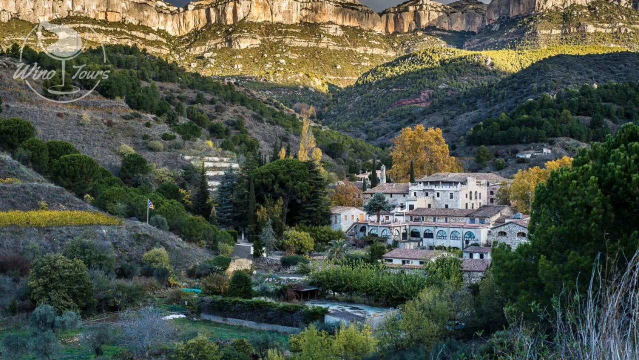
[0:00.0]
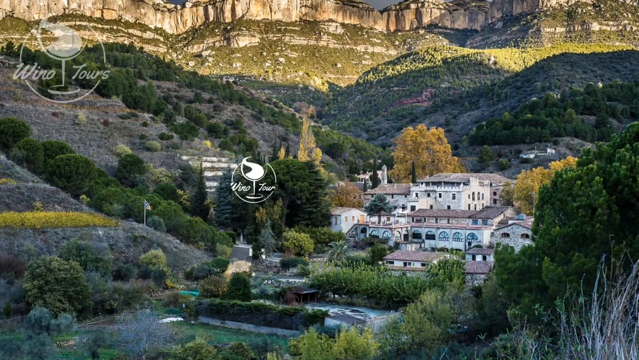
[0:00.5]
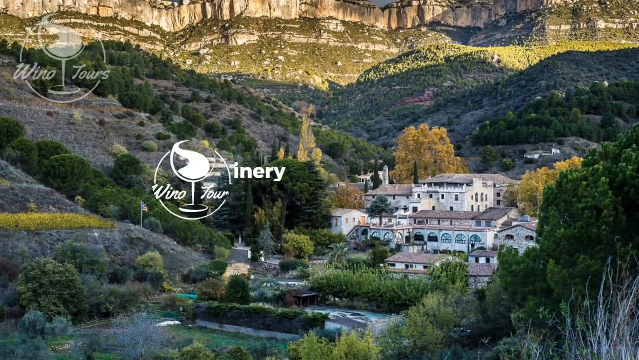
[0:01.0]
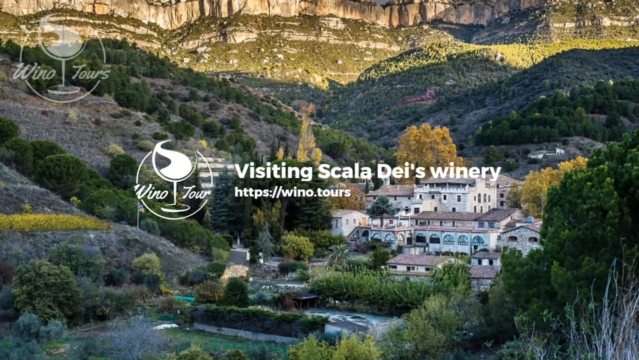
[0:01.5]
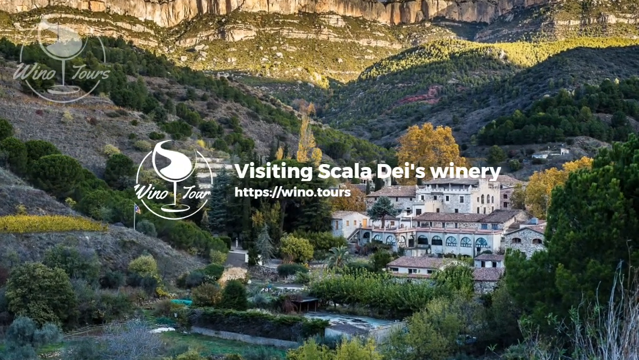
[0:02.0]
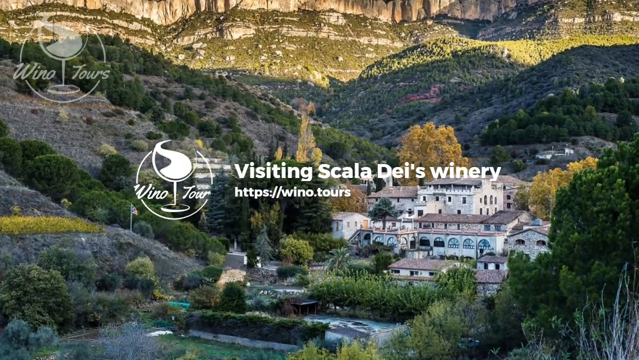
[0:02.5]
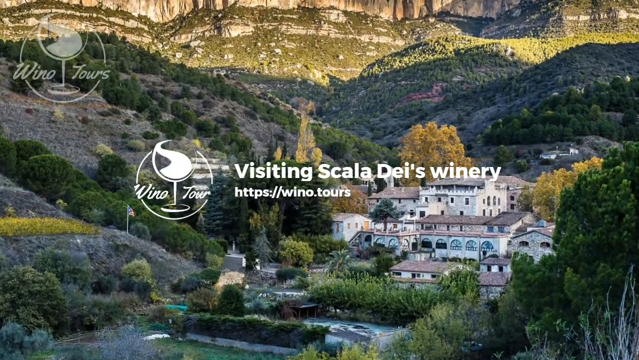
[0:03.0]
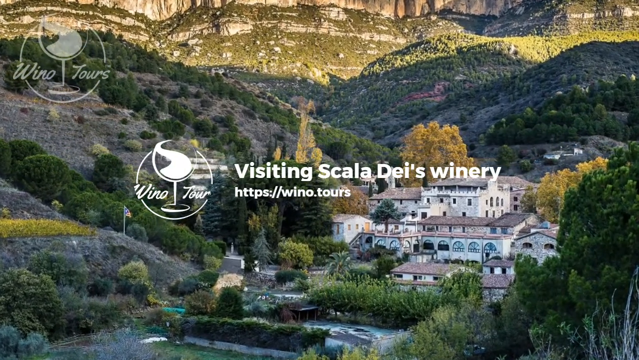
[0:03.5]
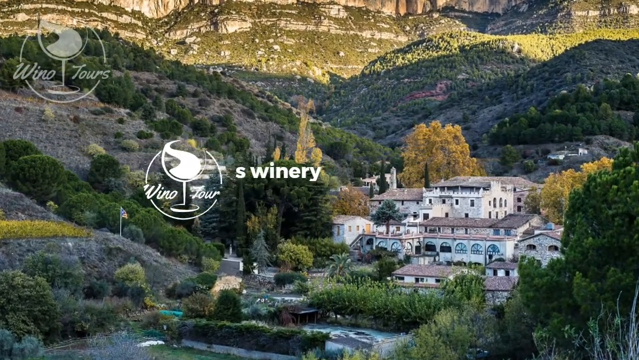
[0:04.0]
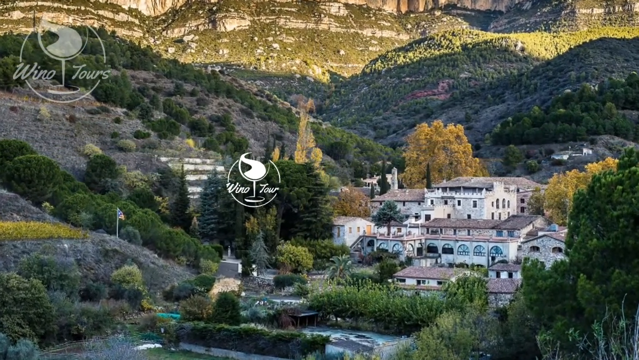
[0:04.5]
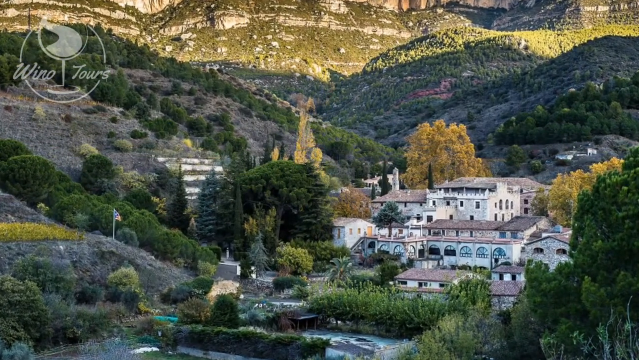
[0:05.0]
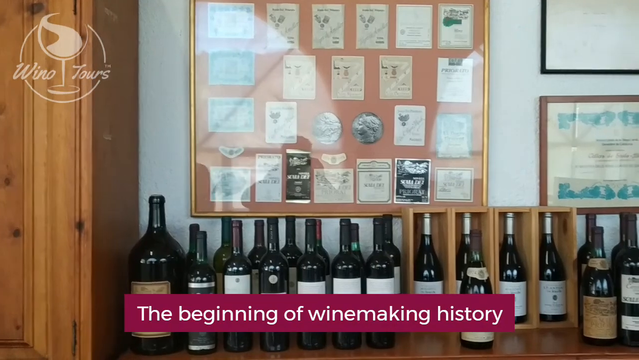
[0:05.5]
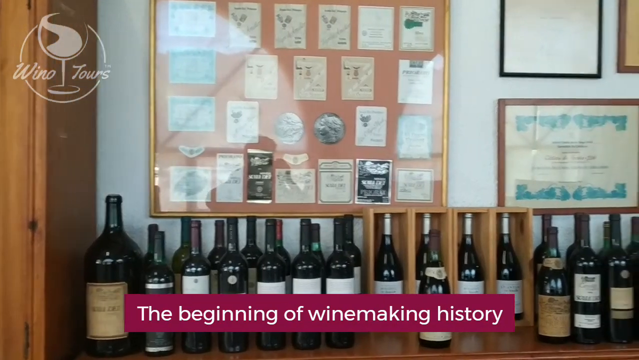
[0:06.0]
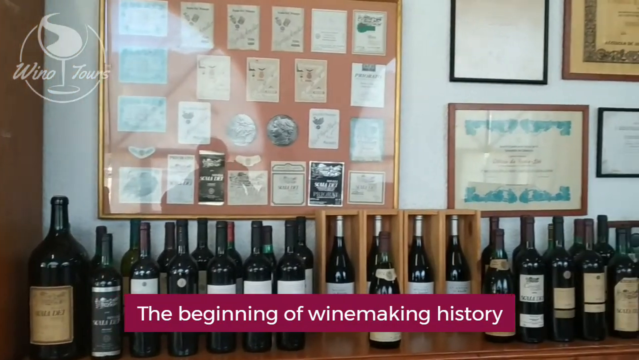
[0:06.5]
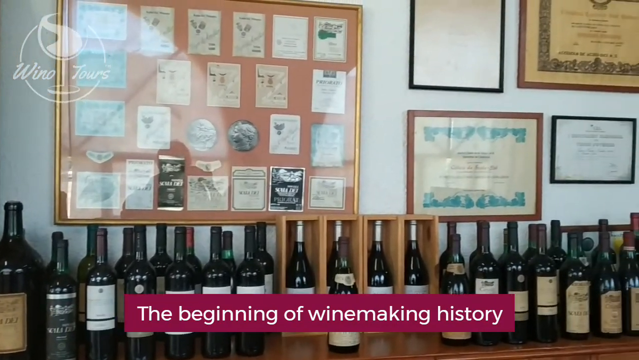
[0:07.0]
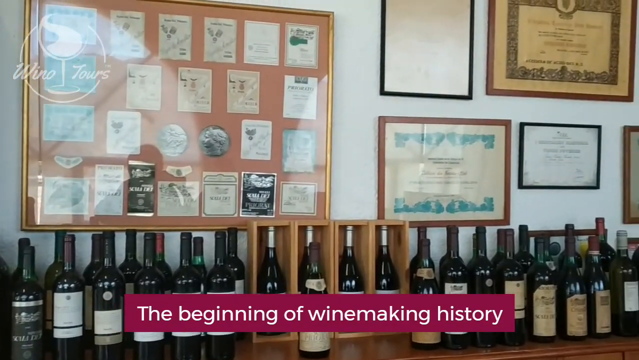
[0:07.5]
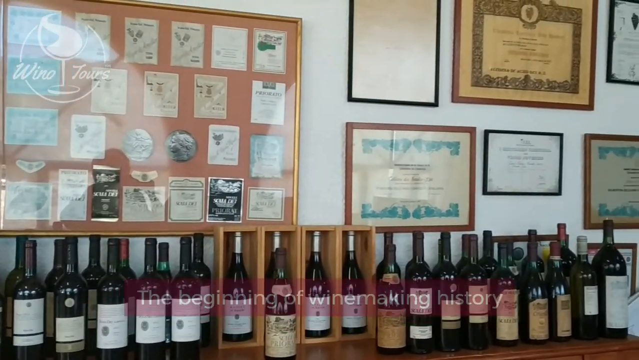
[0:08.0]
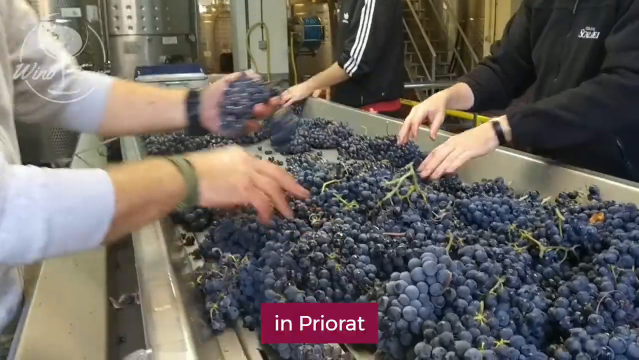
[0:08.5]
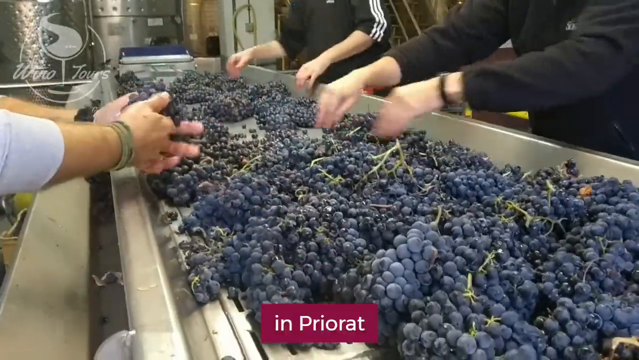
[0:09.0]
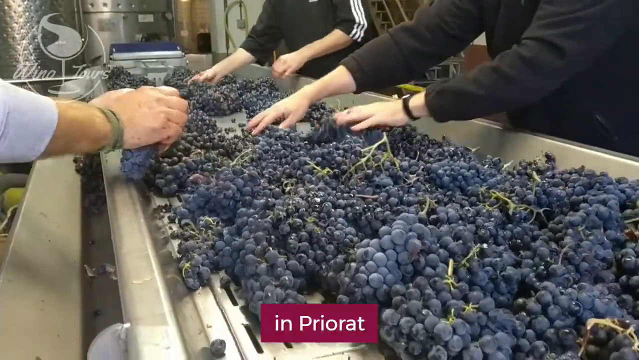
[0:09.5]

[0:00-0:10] Introductory text appears on the screen. In the upper left-hand corner is a watermark that looks like a partially full wine glass, with the words "WINO TOURS". In the middle of the screen is the same image, this time as a white graphical design rather than a watermark; here the wine glass looks like it contains a winding road or winding river rather than liquid, almost as if someone is pouring liquid into the glass or the liquid is meant to resemble a road. Next to this image is text reading "Visiting Scala Dei's winery", and underneath it is a website address, "https://wino.tours". The background is a mountainous area, with what might be mountains in the far background and many very steep, rugged-looking hills. There is some greenery, but not much; the place is not lush. In the lower right section of the screen is what looks like a very large house, maybe of a southwestern-type or possibly Italian design. It is likely also a place of business, since many buildings are grouped together, and it is hard to tell which might be a residence and which a business. There are many arched windows as well as many rectangular ones. The camera zooms in a little, and the text "The beginning of winemaking history" appears in a text box at the bottom of the screen, white text on what may be a maroon background. The Wino Tours watermark with the glass logo is still in the upper left corner. The camera pans over a shelf covered in wine bottles, probably two or three dozen of them. Above them on the wall are several framed documents hanging: one large frame holds several small documents, and next to it are individual documents in individual frames. The text disappears and the camera switches to a different view of what looks like a conveyor belt. Hands belonging to at least three separate people are visible, one on the left side and two on the right. On the conveyor belt are many bunches of purple grapes on the stem, vibrating and moving along, and the people use their hands to sort through the grapes.